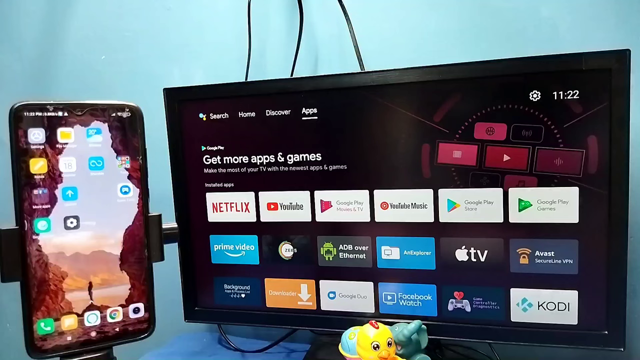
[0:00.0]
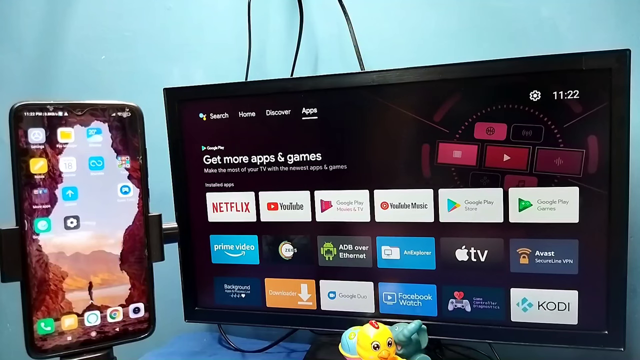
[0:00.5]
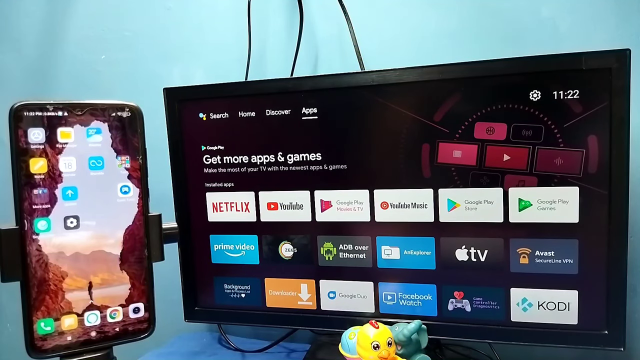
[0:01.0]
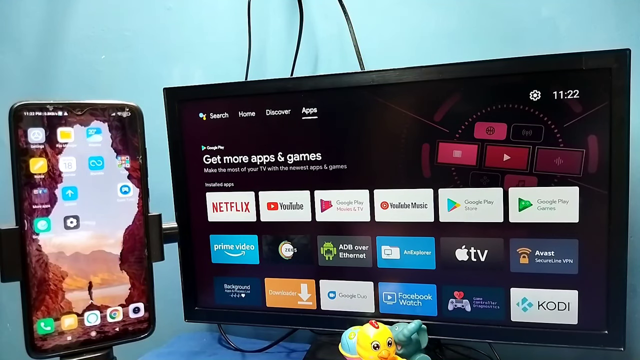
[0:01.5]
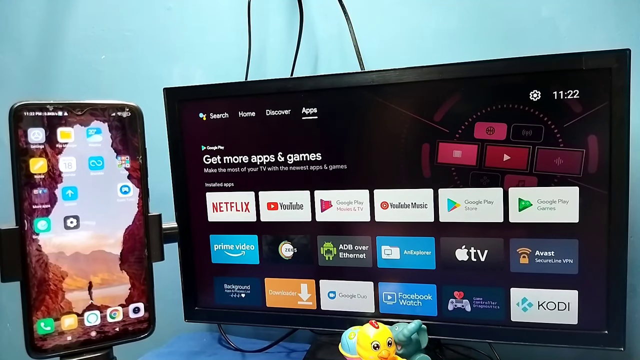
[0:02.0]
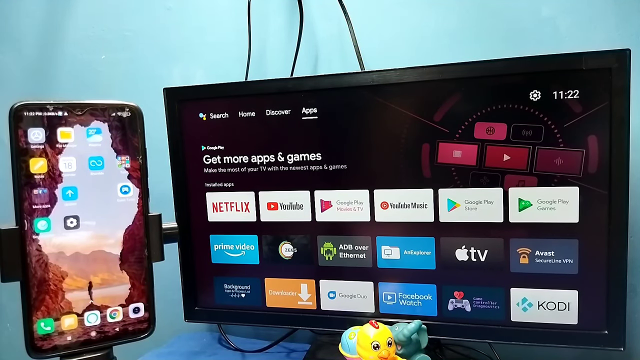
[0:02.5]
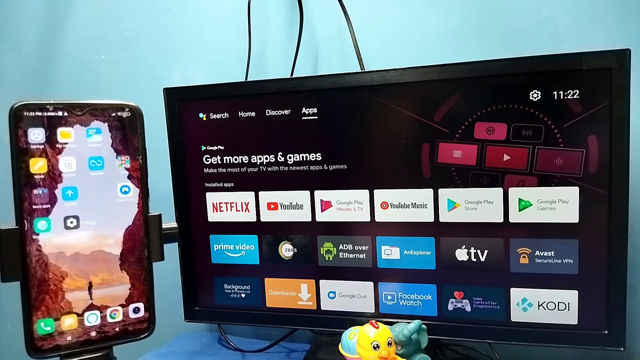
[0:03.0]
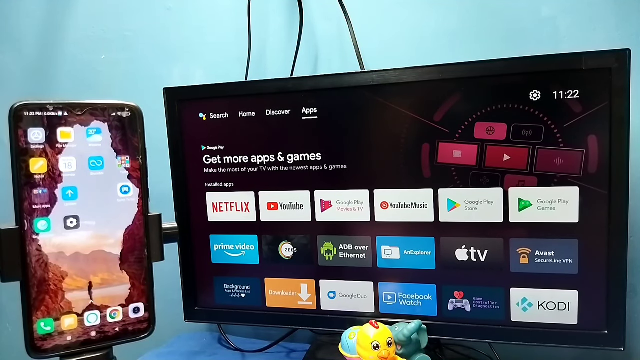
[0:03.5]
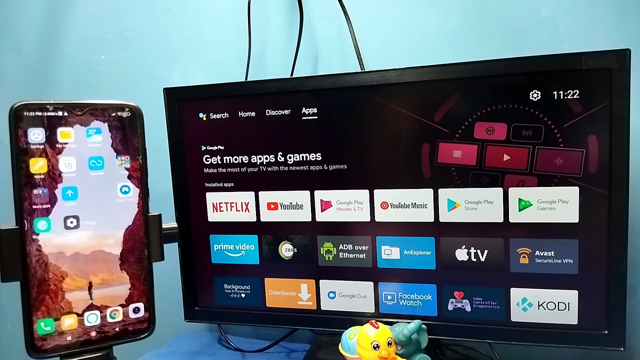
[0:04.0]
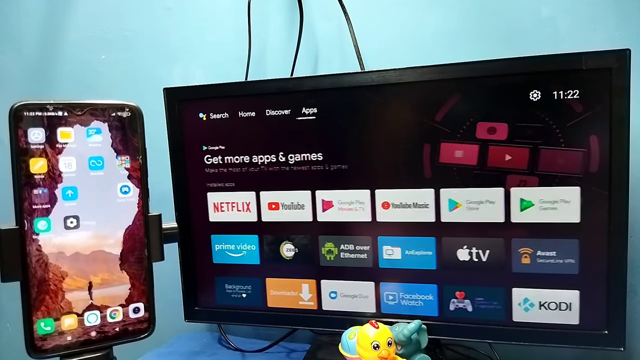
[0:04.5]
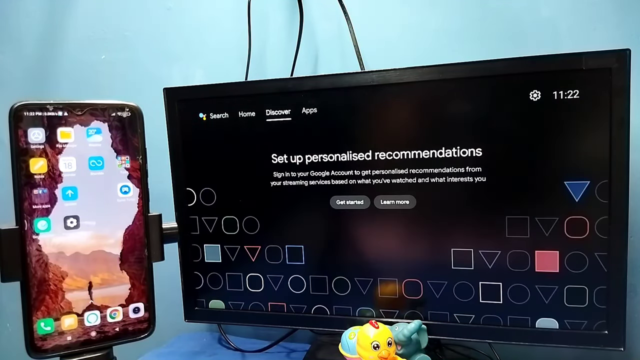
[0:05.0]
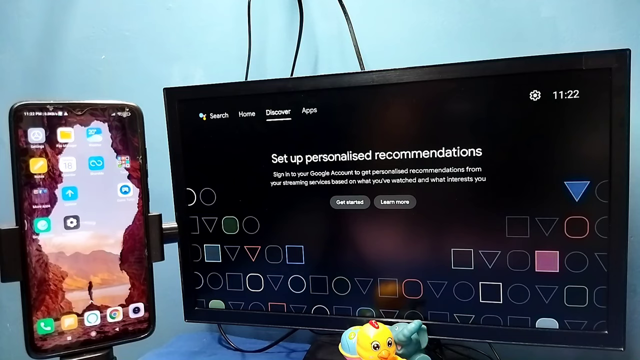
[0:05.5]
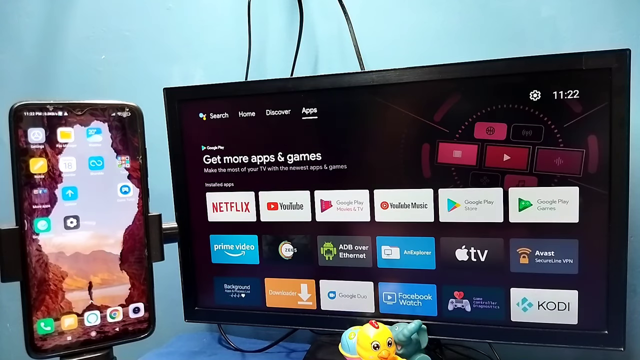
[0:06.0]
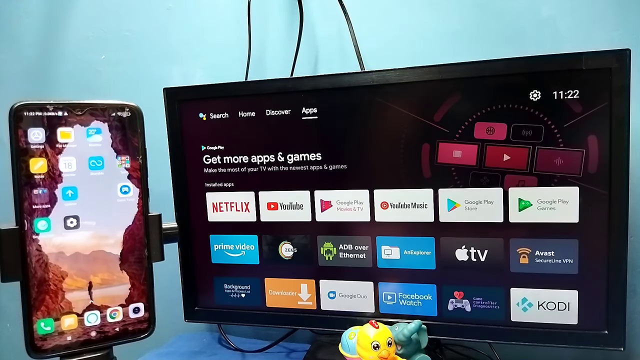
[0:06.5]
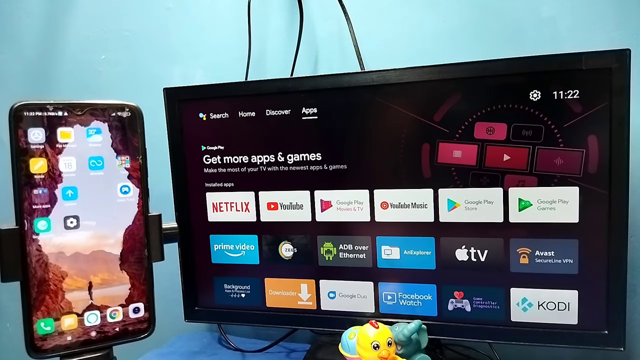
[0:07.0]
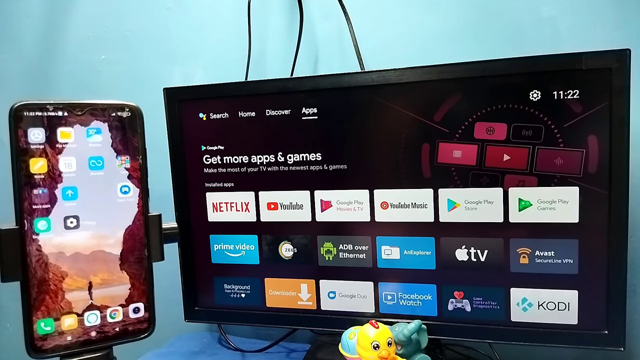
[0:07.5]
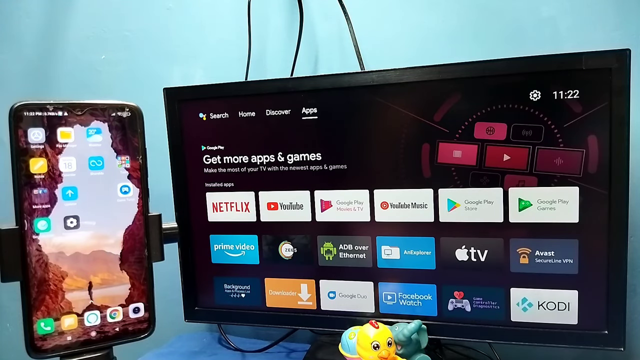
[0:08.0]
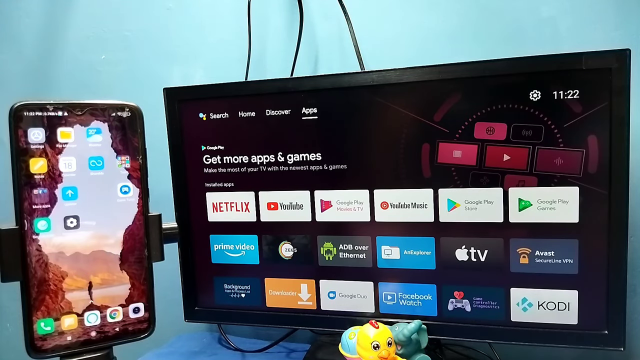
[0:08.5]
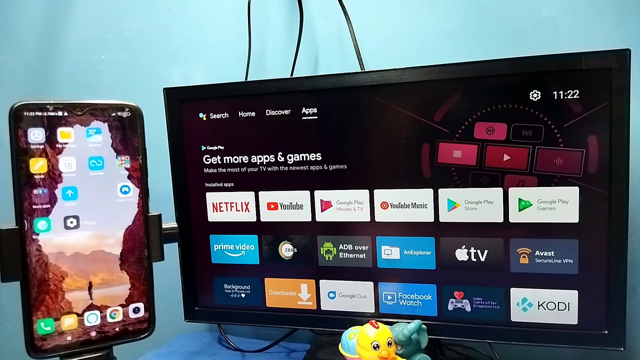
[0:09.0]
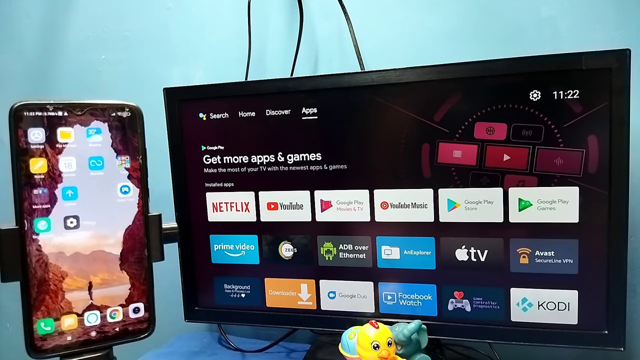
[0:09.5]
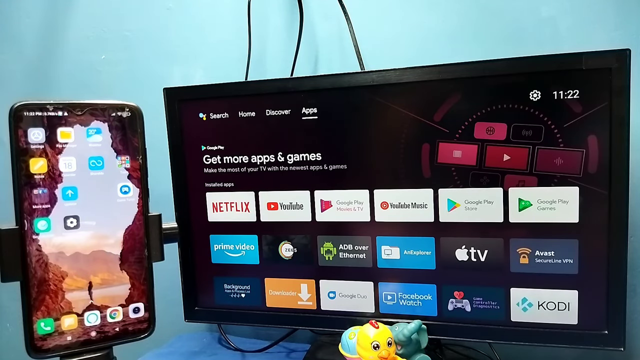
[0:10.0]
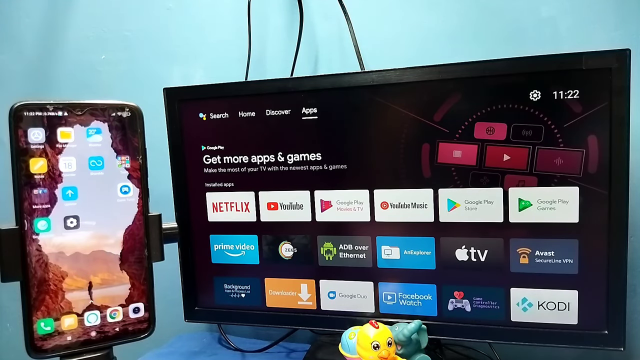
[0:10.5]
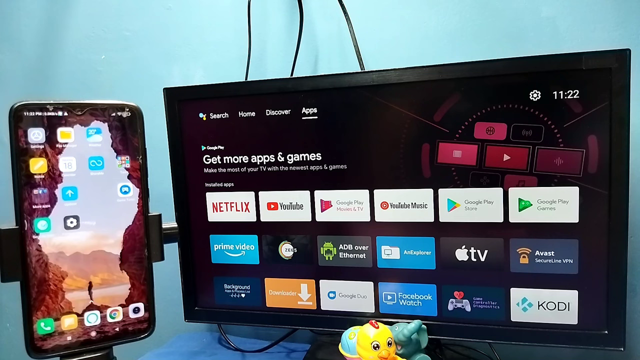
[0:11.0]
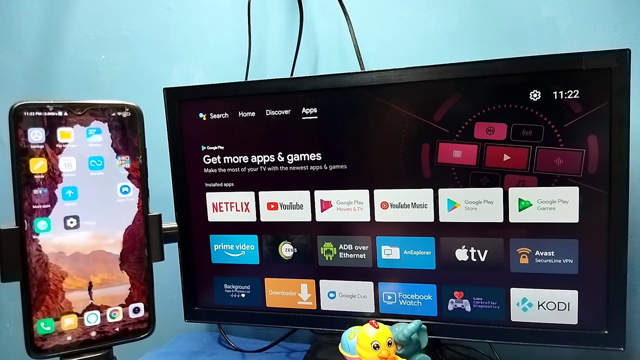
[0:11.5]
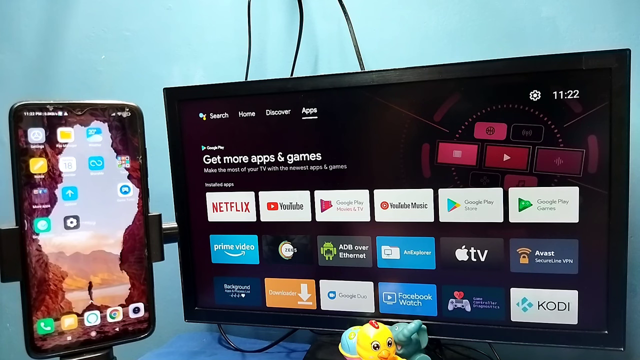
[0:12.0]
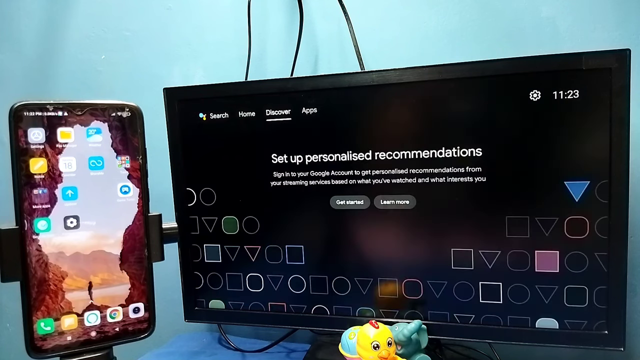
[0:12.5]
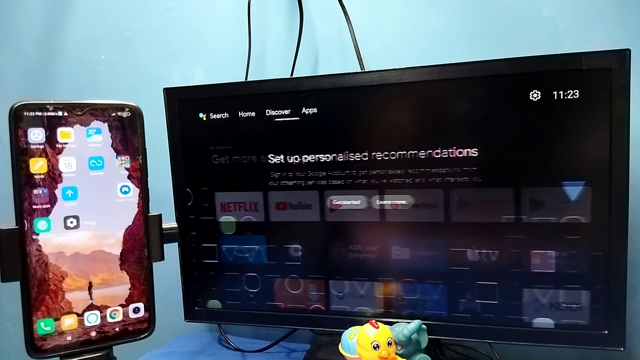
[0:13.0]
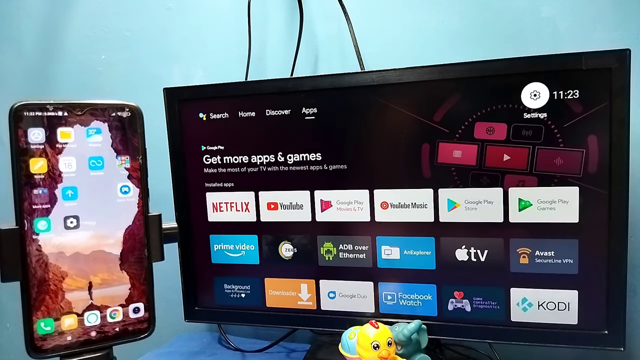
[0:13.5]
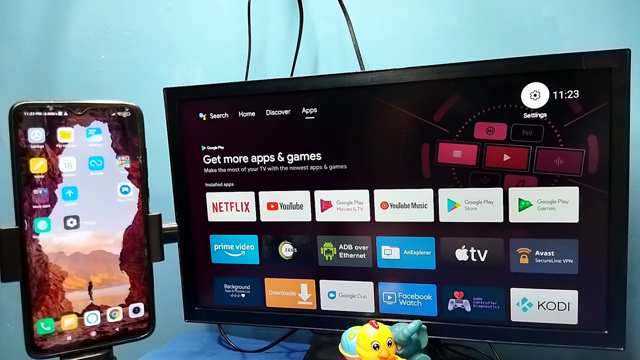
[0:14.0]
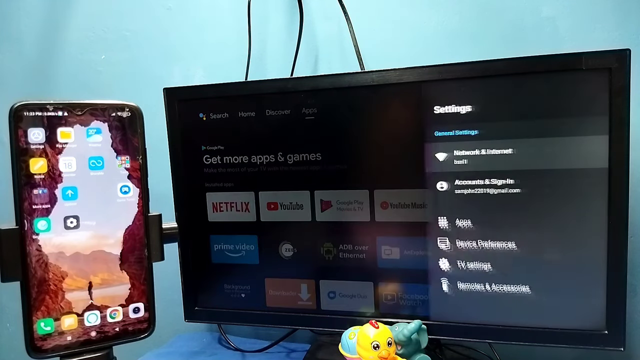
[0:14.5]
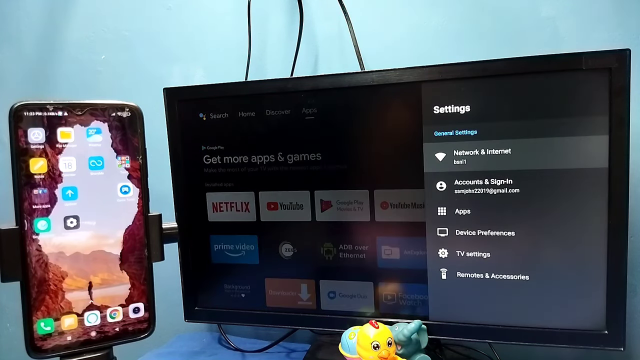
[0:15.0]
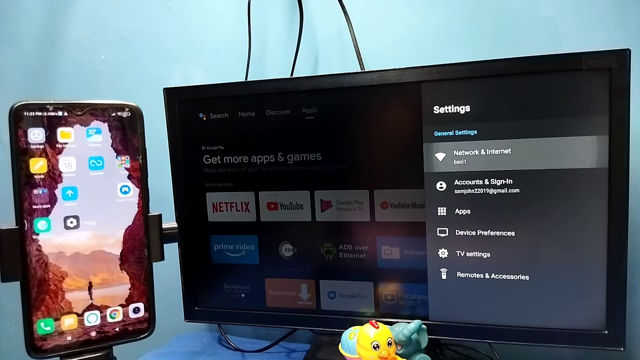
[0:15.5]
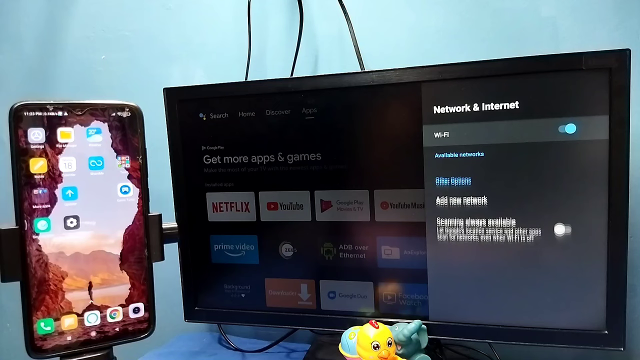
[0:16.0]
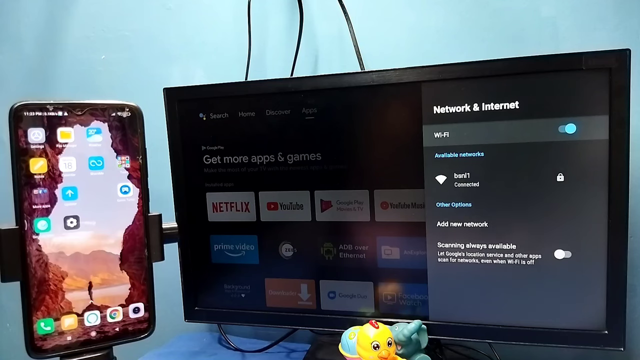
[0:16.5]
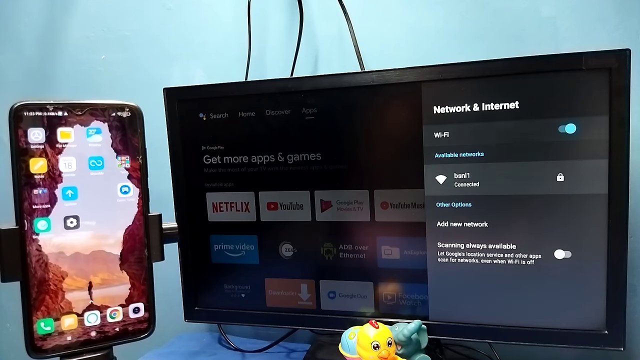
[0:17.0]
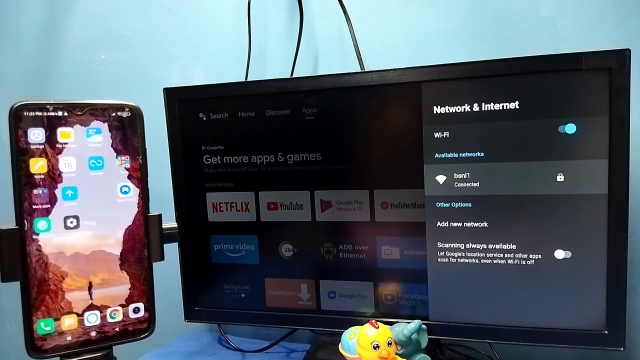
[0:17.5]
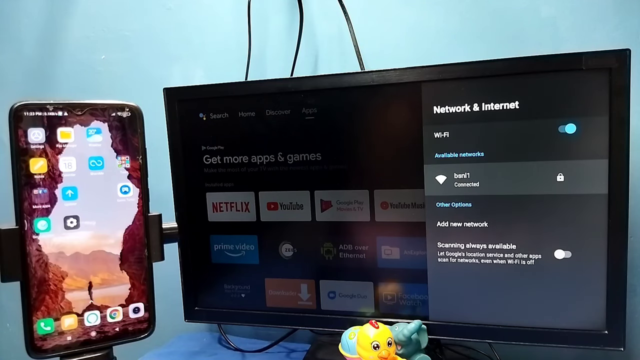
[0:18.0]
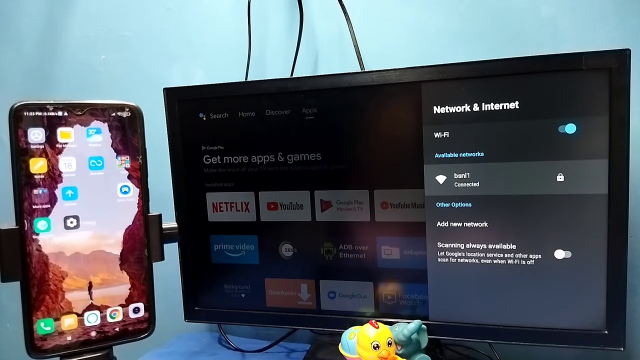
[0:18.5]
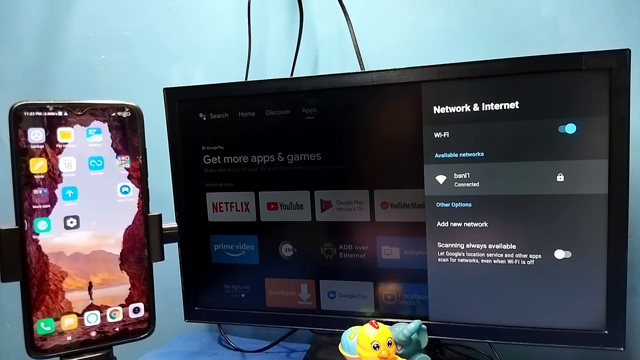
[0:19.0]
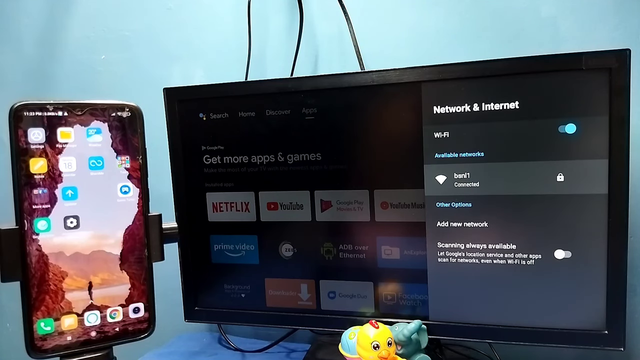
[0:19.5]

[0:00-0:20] What appears to be a flat screen monitor, maybe a TV or a computer, is shown with what seems to be a cell phone on a stand next to it. There is blue on the wall behind them and on the surface they are on. The flat screen is set to show apps and games: Netflix, YouTube, Google Play, YouTube Music, Google Play Store, another Google Play item, Prime Video, Apple TV, and Facebook Watch, with more on the bottom that are hard to read. The phone has a wallpaper and many apps that look like they may be social media, calendars and similar. The time on the flat screen is 11:22, and the top menu shows search, home, discover and apps, with apps underlined.